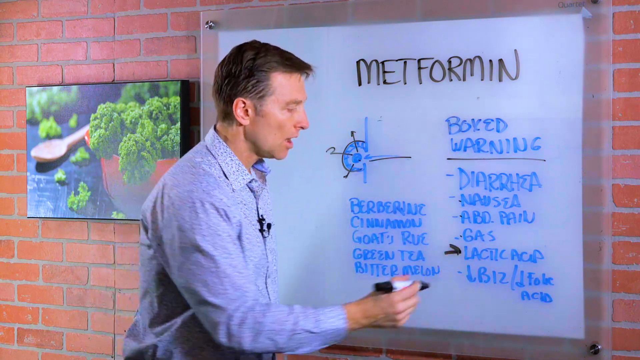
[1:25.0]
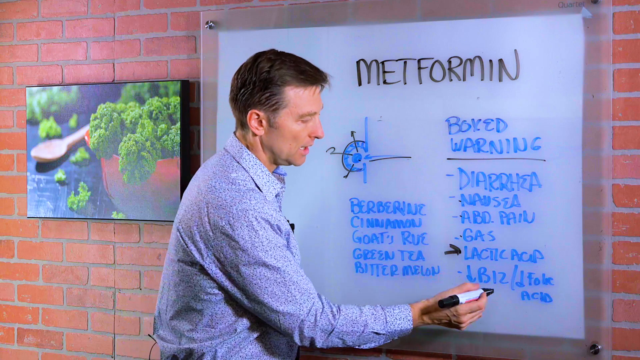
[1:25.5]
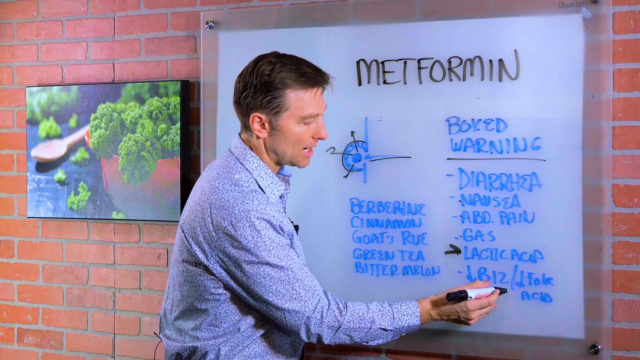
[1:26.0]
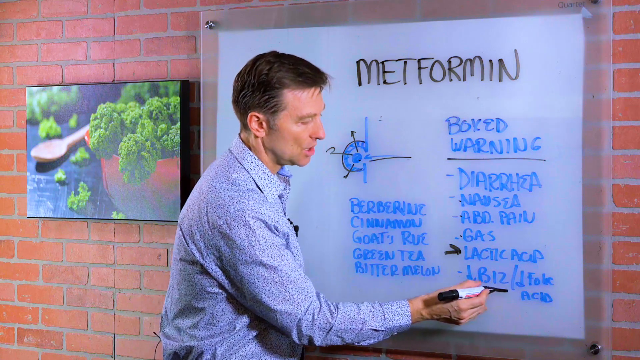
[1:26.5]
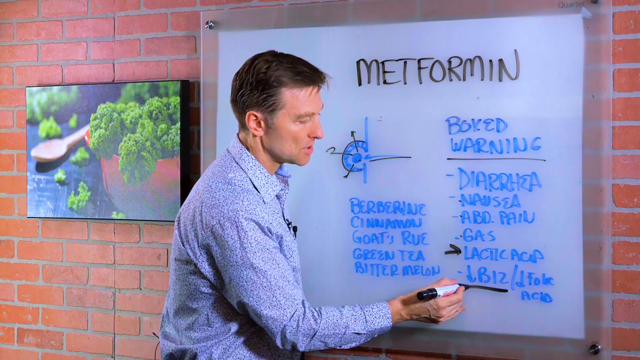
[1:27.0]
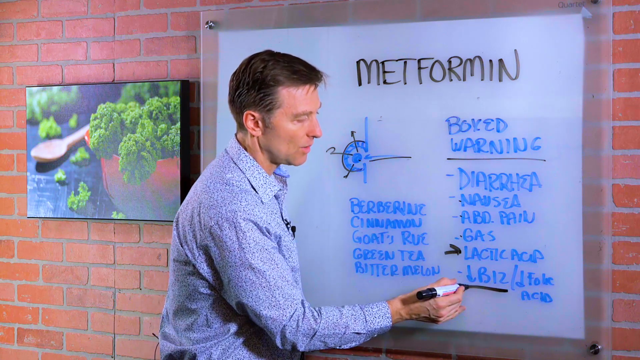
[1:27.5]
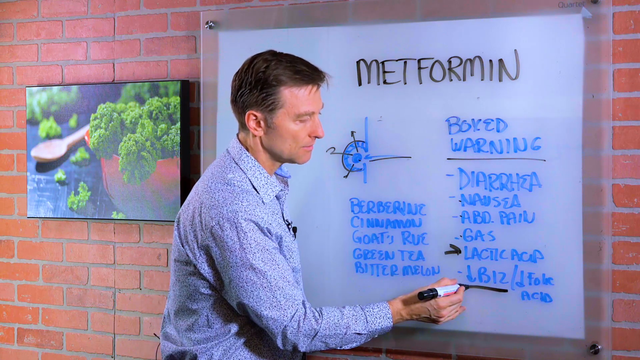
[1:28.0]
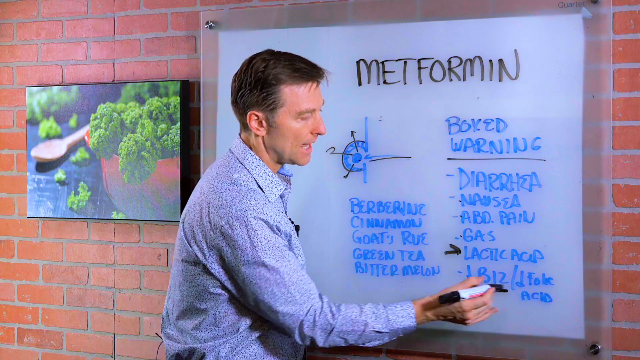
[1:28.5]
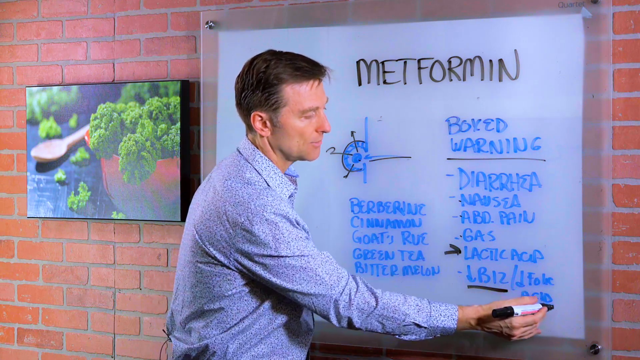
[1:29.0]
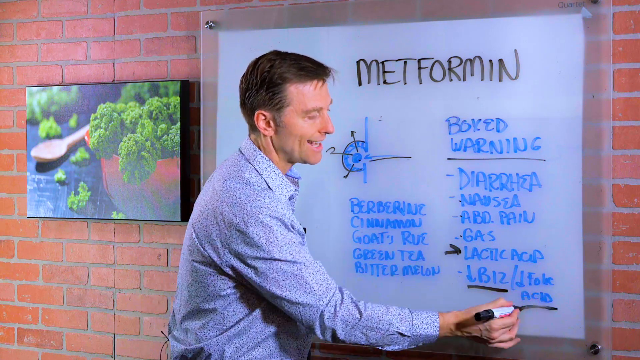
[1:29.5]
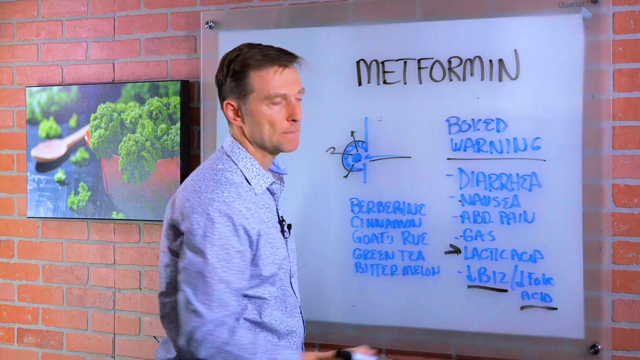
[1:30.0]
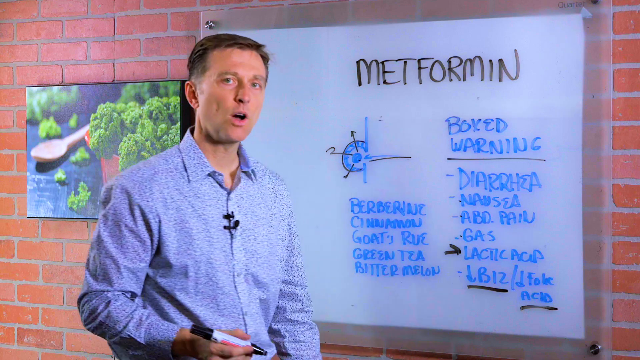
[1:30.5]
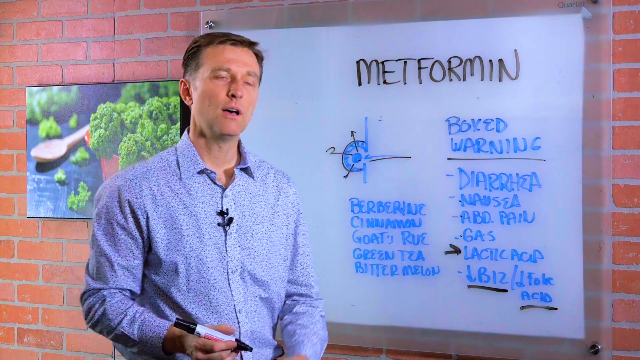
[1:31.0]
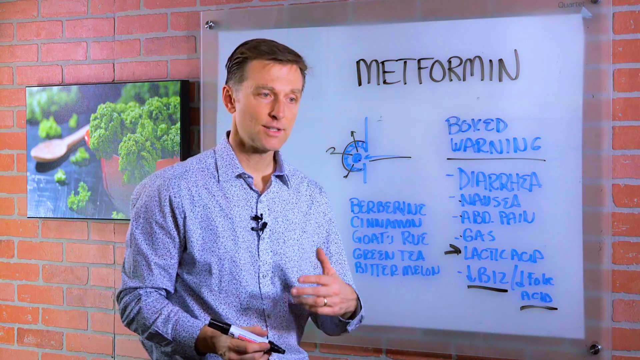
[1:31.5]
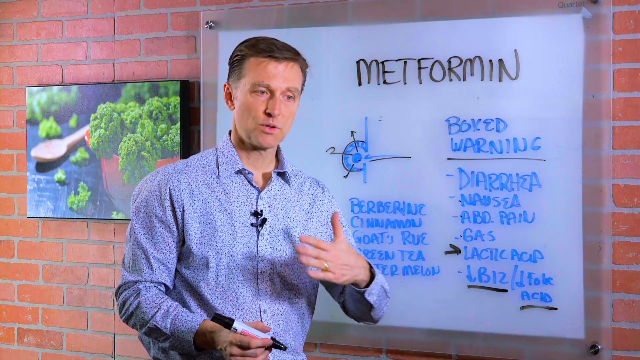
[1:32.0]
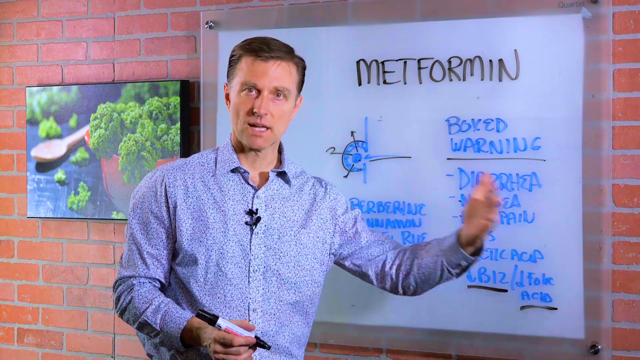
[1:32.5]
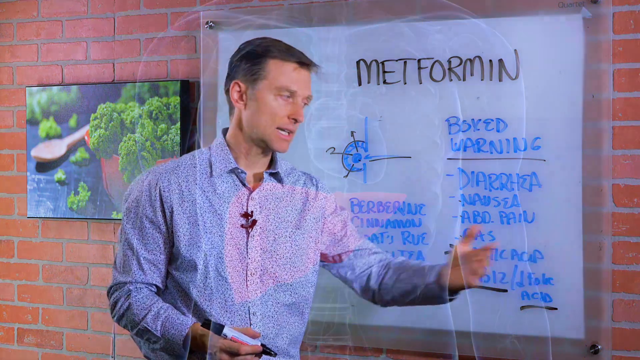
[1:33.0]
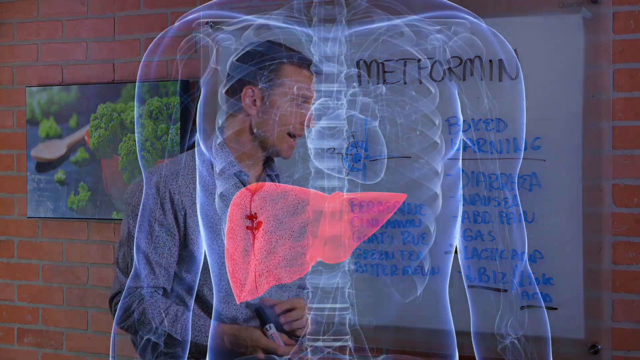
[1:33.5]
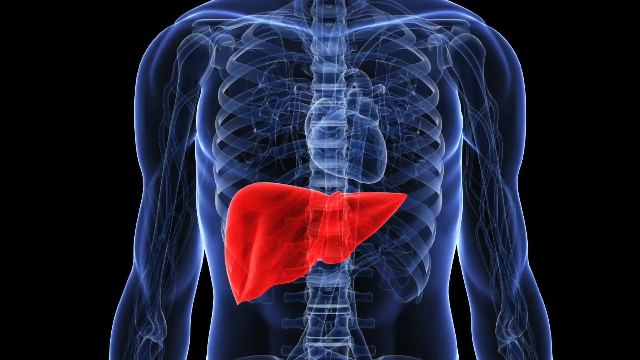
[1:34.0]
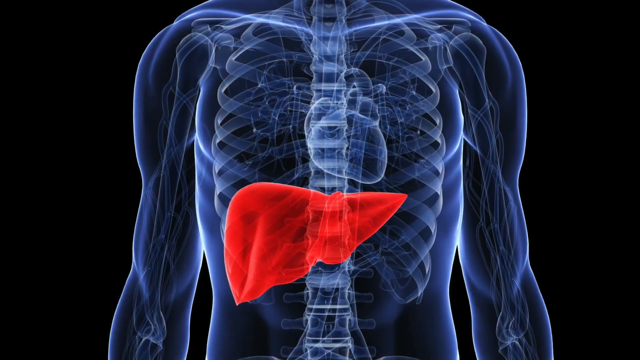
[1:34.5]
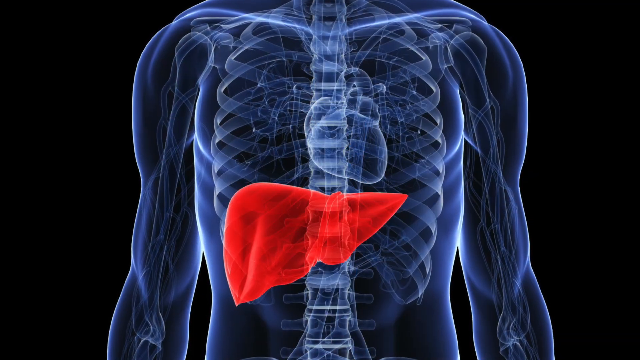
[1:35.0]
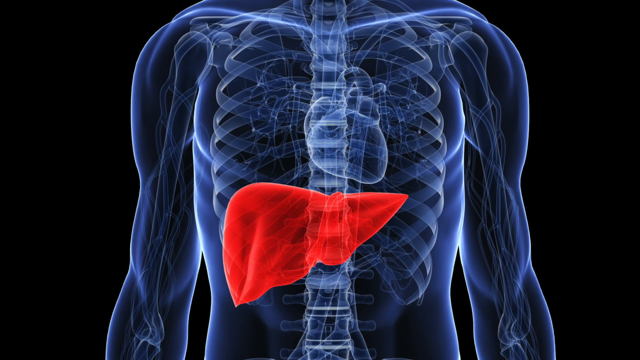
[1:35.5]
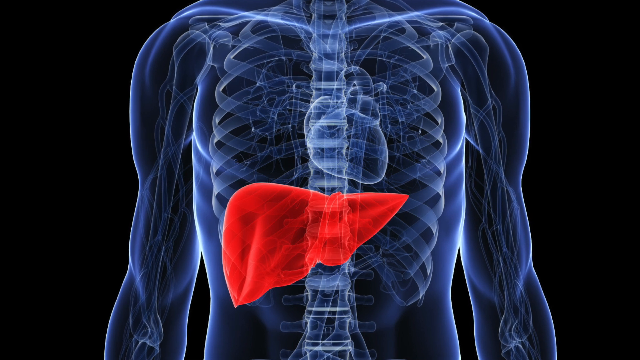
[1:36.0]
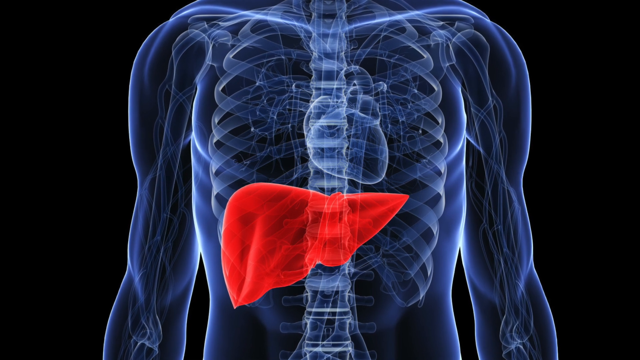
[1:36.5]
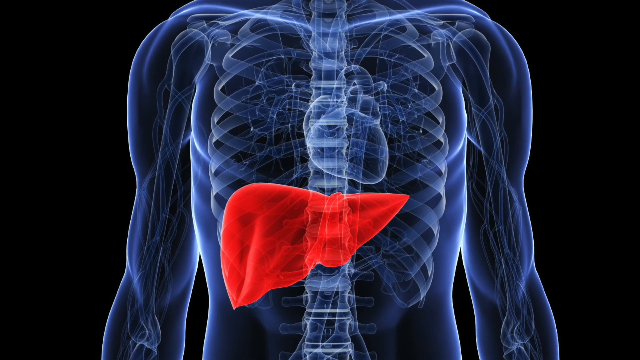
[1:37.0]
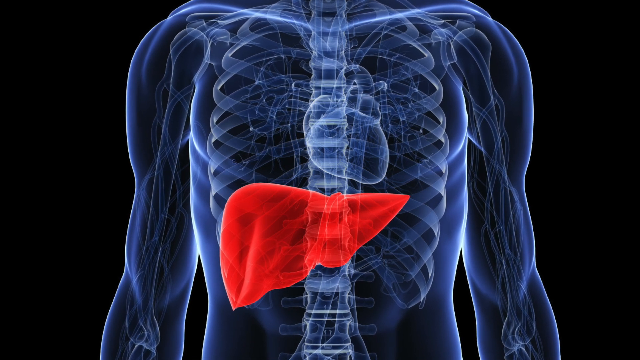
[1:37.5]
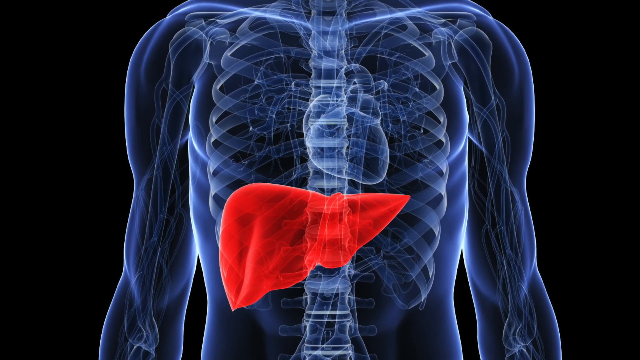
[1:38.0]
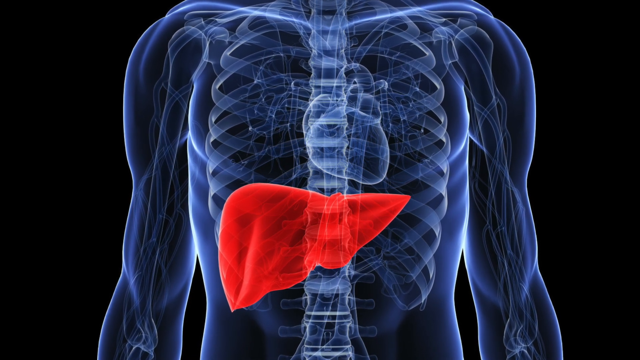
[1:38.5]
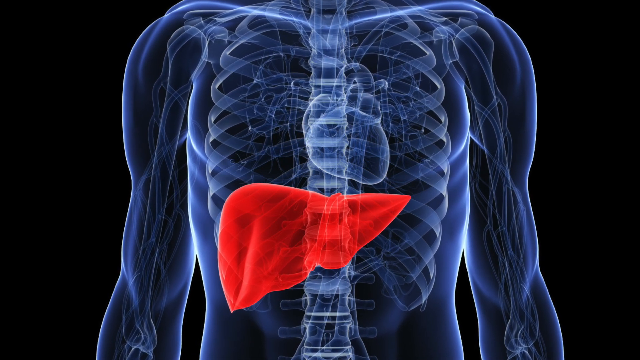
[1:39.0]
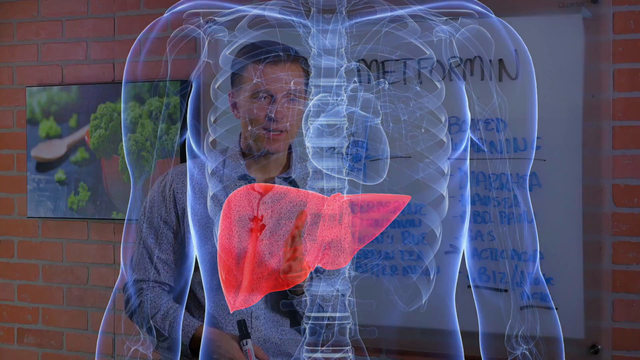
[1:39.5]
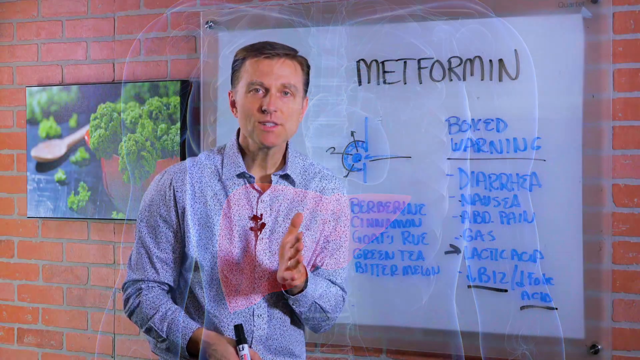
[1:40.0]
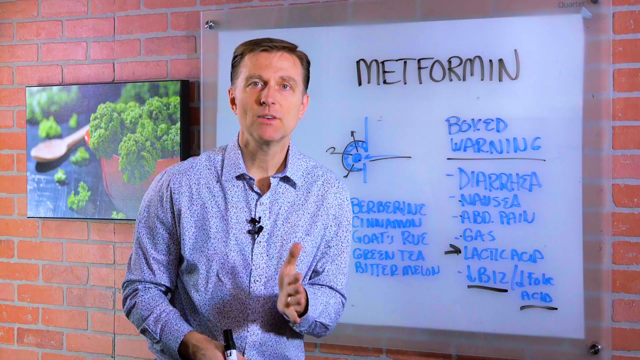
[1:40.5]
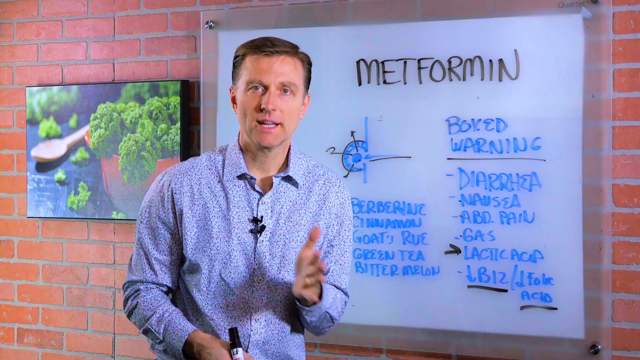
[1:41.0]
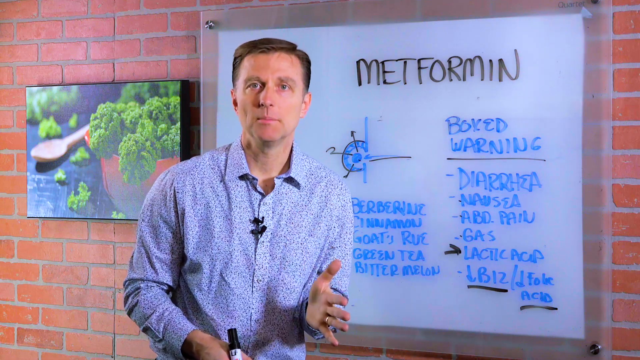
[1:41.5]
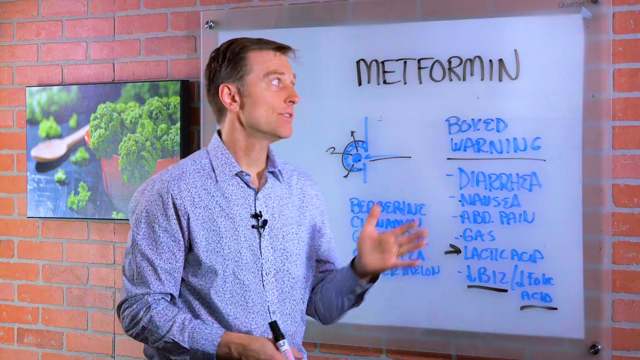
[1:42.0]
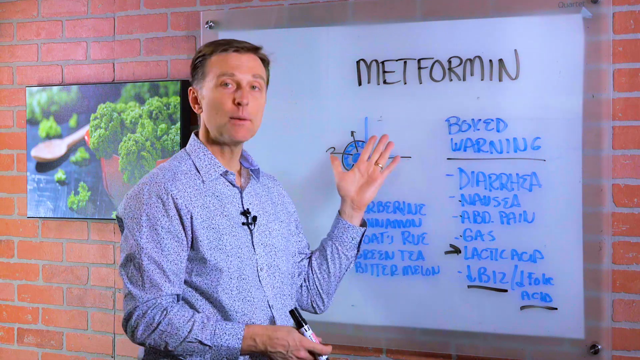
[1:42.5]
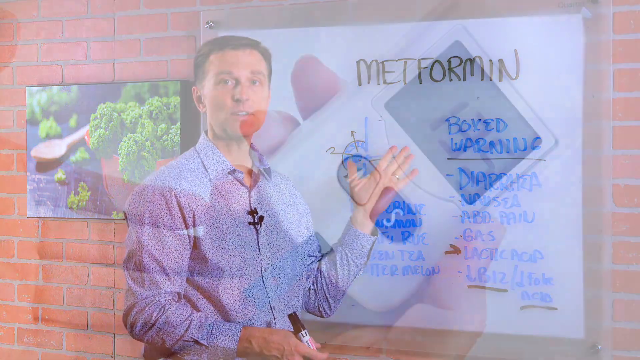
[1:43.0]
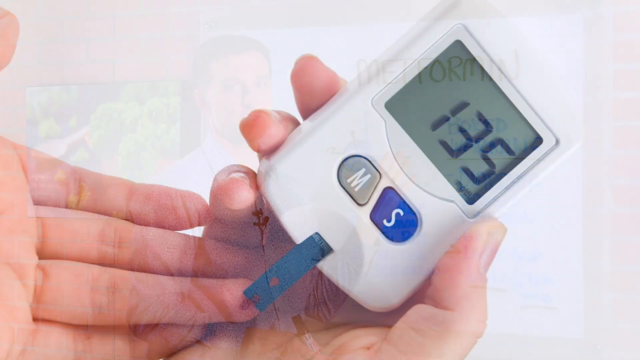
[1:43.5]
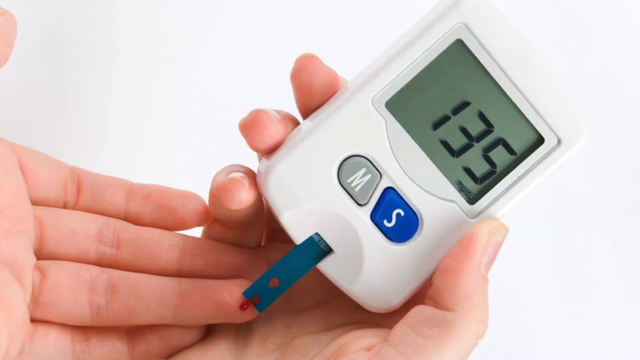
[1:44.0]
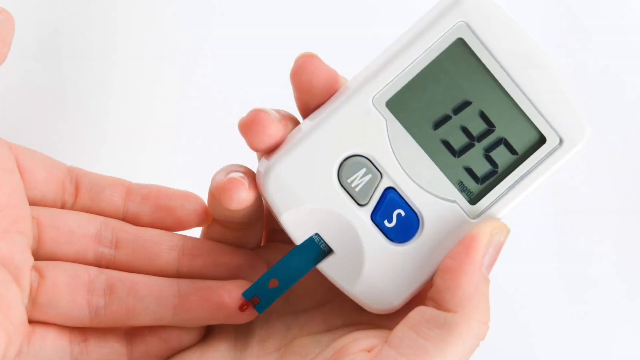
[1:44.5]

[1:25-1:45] The man continues underlining each portion of the warning. Moving on from the arrow he drew under the words "lactic acid," he draws a line in black marker under the downward arrow and "B12," then another line under the word "acid" in the downward-arrow "folic acid." The camera pulls out as he continues gesturing. The video moves to a stock photo of a cross-section of an x-ray of the human body with an organ highlighted in red on a black background. It cuts back to the man explaining with his hands, then to a blood sugar measuring device with a blood sugar reading visible on its LCD screen; a person holds it in their two hands, and a finger has recently been pricked. The man at the board then resumes explaining while underlining certain words in the boxed warning.